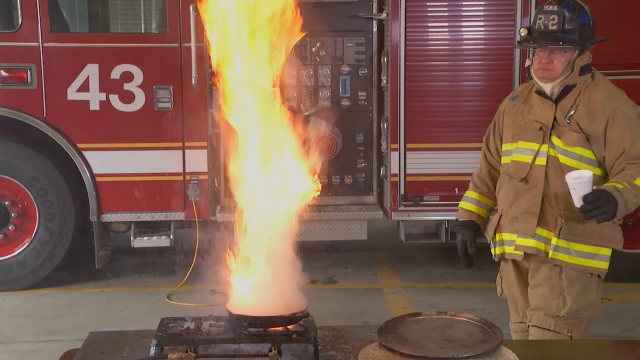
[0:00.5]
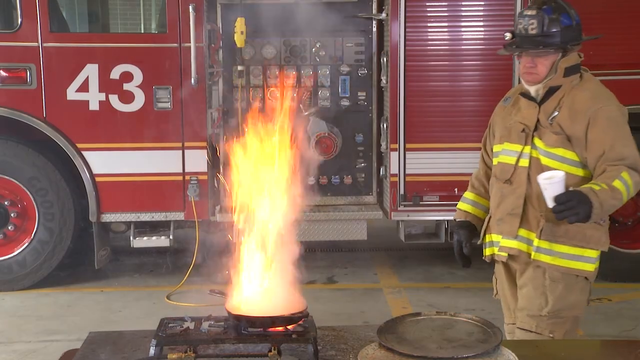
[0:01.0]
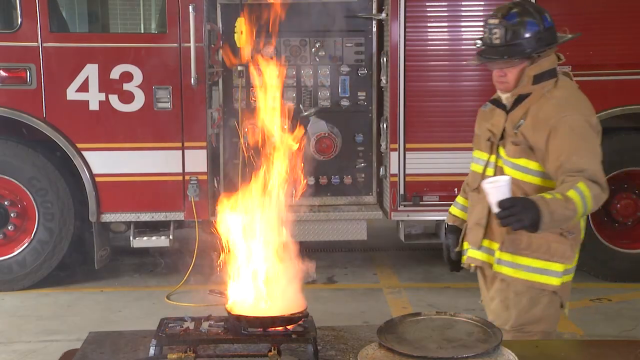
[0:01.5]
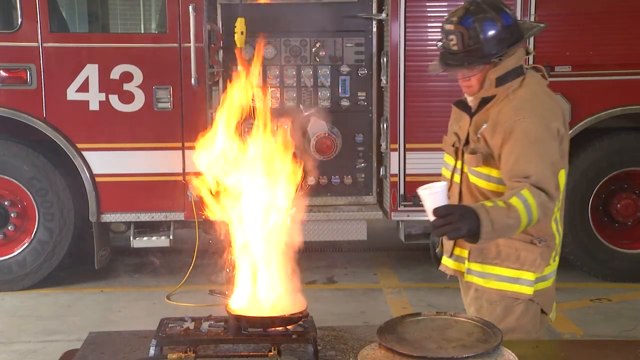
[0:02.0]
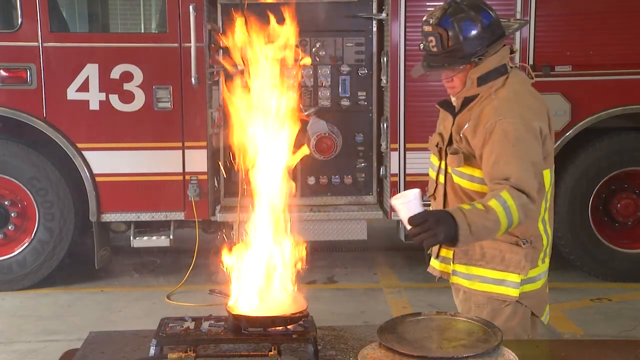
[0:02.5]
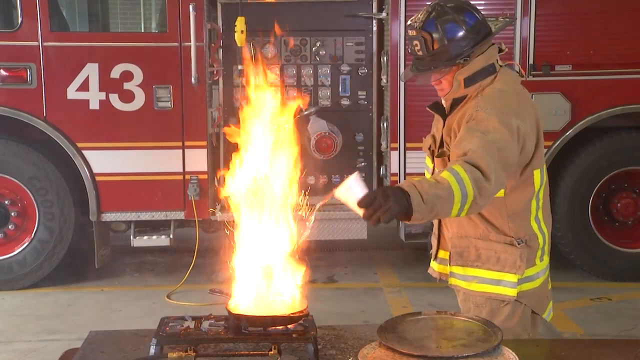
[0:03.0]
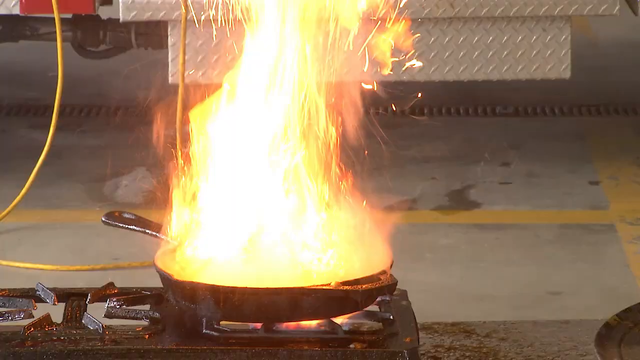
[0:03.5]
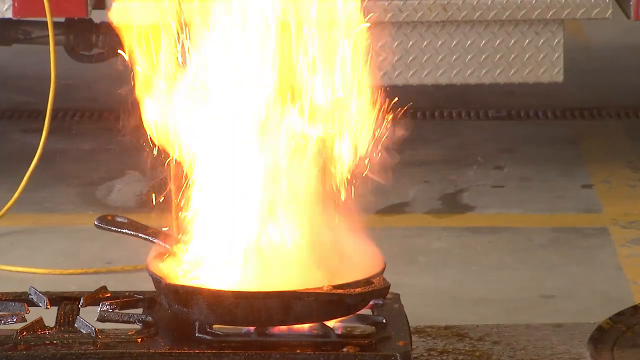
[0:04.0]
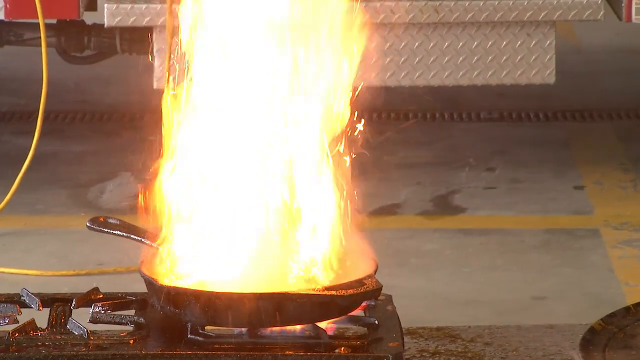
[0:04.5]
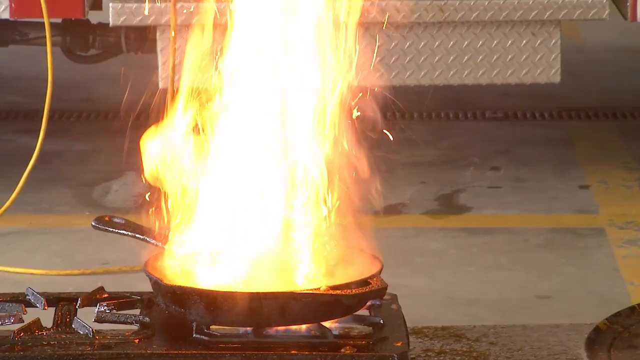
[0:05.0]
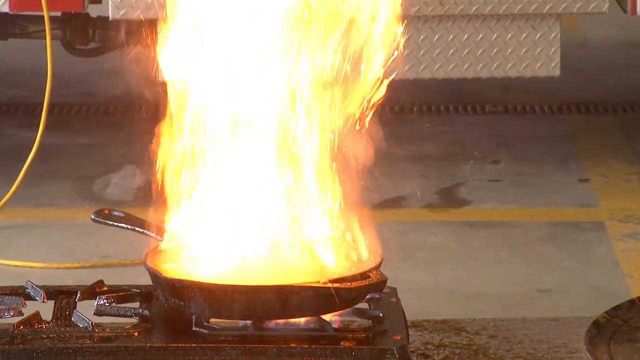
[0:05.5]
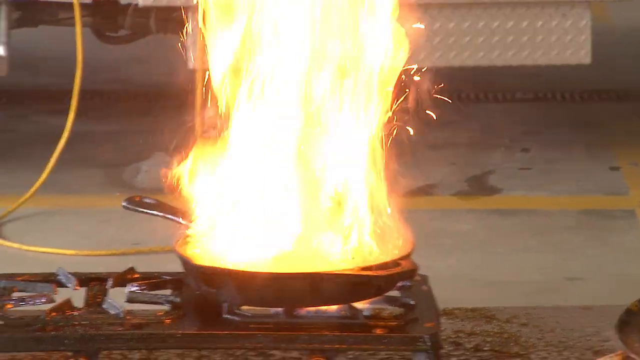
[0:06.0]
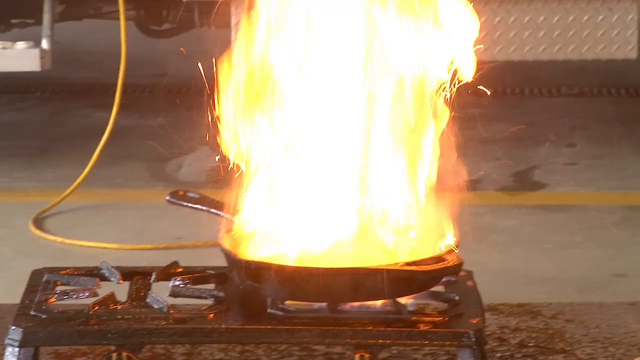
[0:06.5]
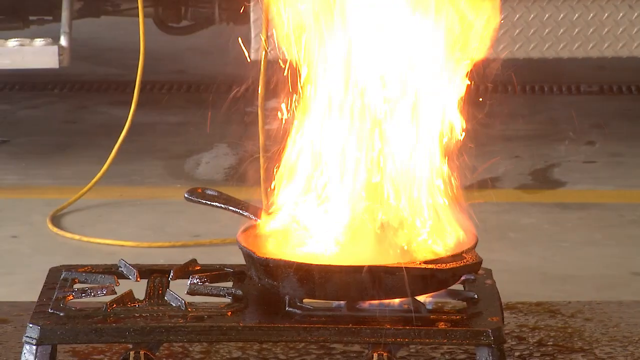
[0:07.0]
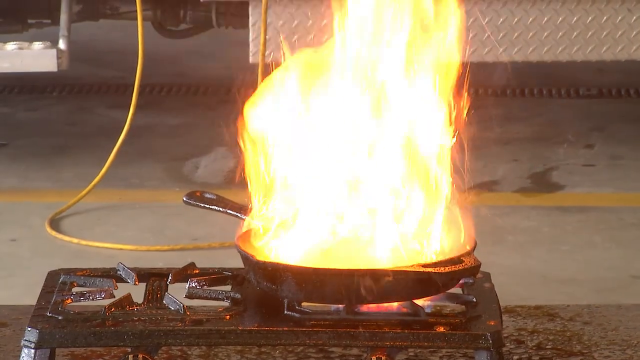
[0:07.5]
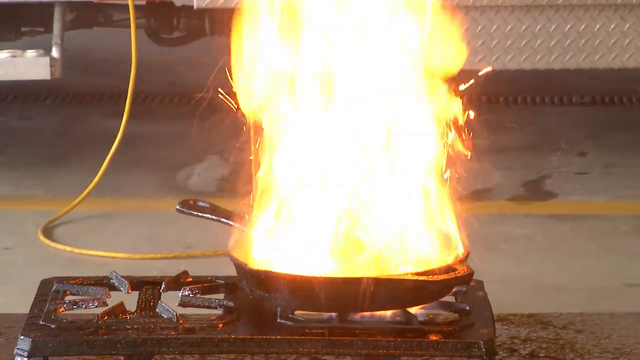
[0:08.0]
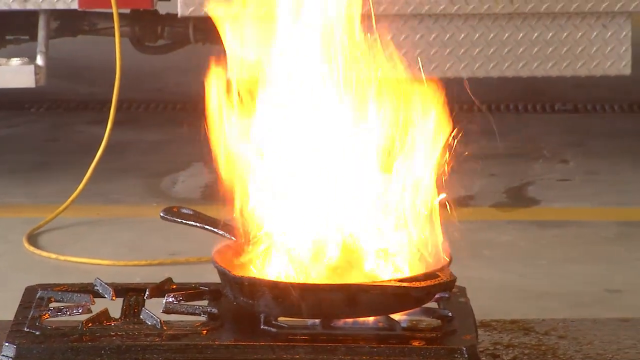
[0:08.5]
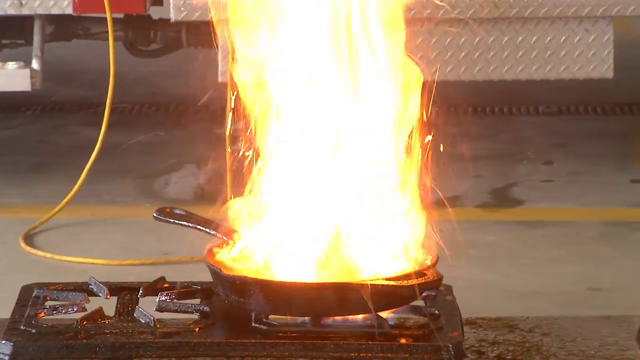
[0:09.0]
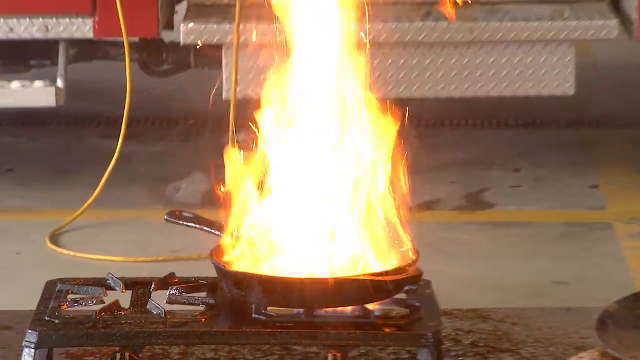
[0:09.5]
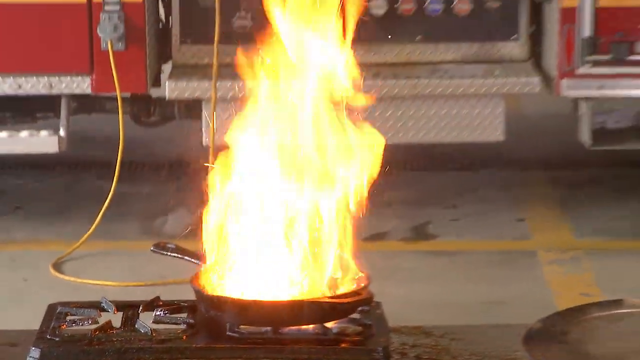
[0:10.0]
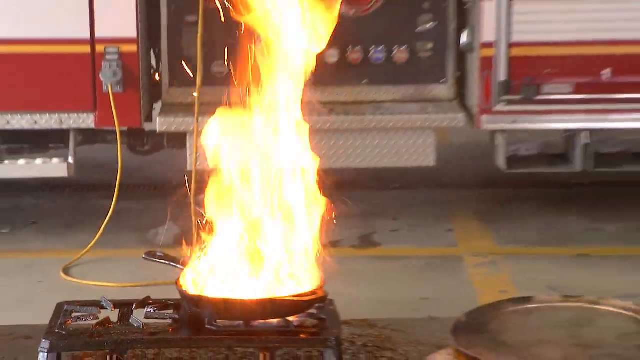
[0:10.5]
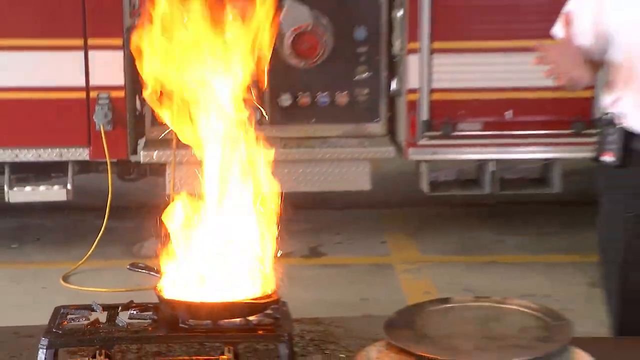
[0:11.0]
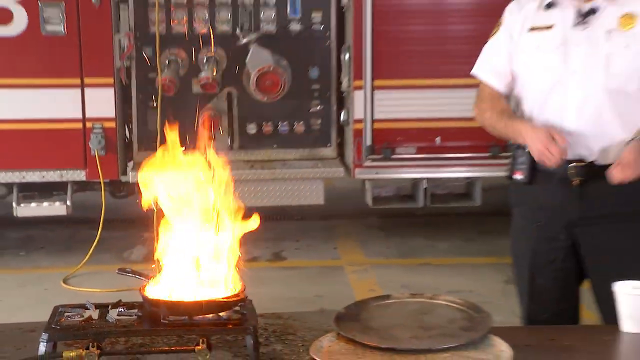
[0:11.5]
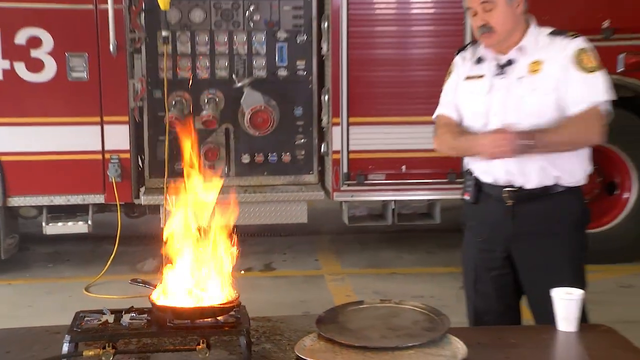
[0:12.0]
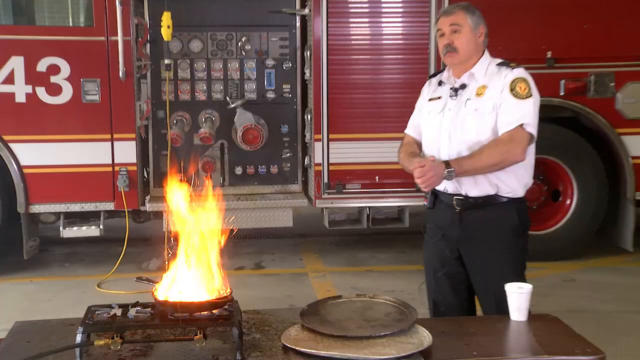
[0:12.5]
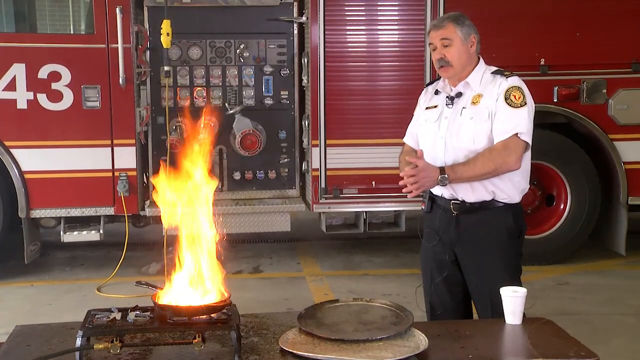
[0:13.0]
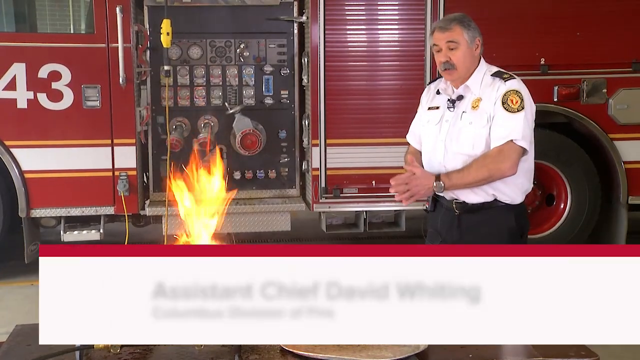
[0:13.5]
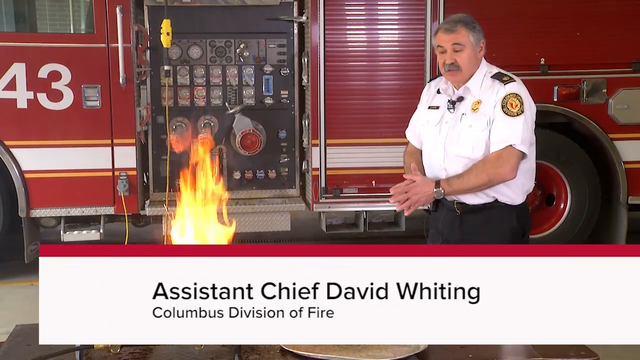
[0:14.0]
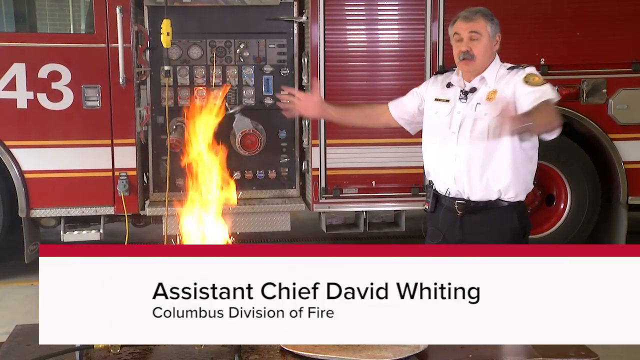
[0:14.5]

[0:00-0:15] The video is titled wrong versus right way to put out a grease fire. A large red fire truck is behind a skillet that is on a burner on a table. In the skillet, what is apparently oil or grease is on fire, so the entire pan is ablaze, with flames approximately three feet high coming out of the top of the pan across its full diameter. A fireman in a full fire suit and helmet stands on the right side of the screen, holding a white styrofoam cup in his black-gloved left hand. He approaches the pan, leans in, and dumps the contents of the cup, apparently water, into it. What looks like possibly steam rises, but the pour does nothing to the fire. Next, apparently the same man stands without his fire suit and black fireman's helmet, wearing a short-sleeved white dress shirt with badges and black pants. He has a large mustache and talks while gesturing, making a dumping motion with his hands and then moving them outward.